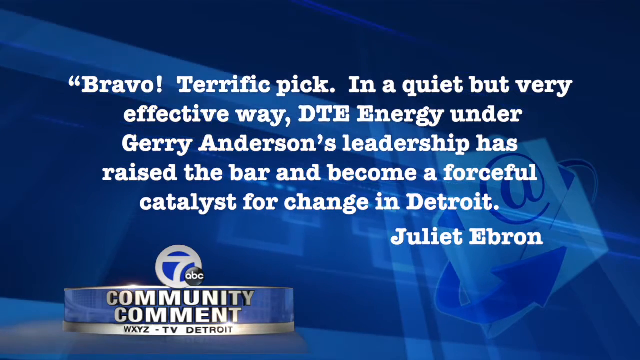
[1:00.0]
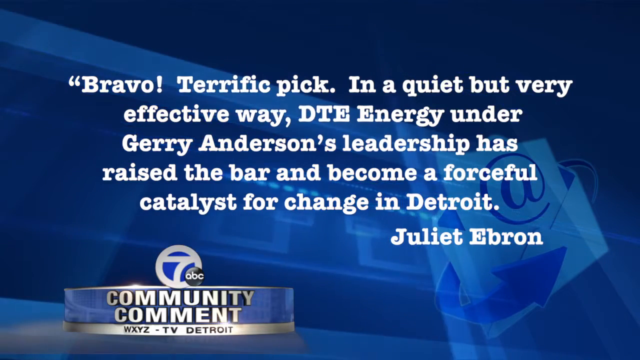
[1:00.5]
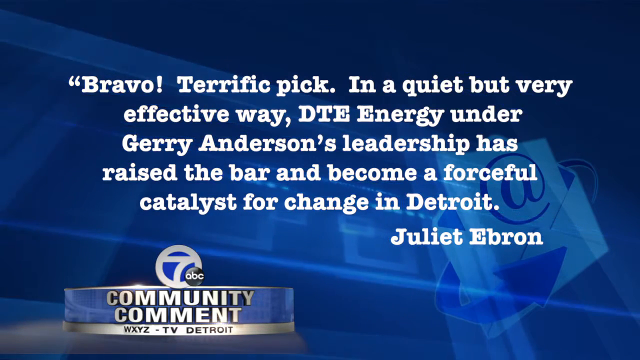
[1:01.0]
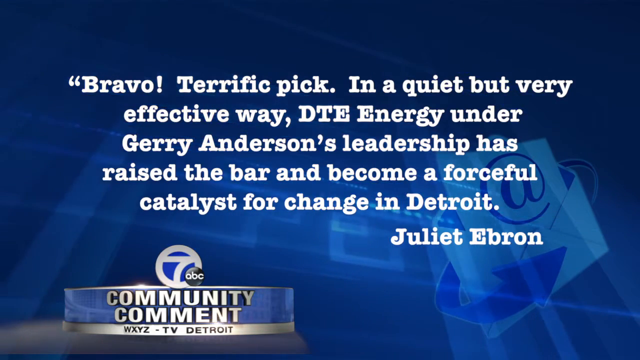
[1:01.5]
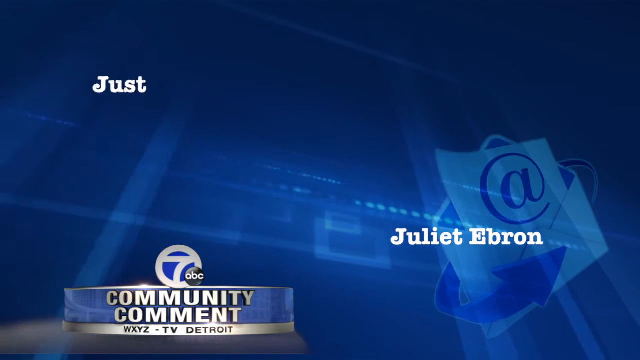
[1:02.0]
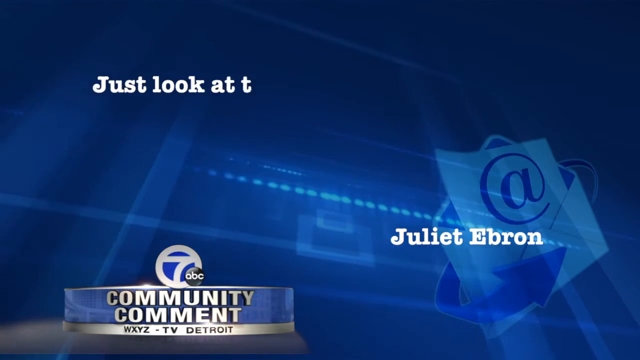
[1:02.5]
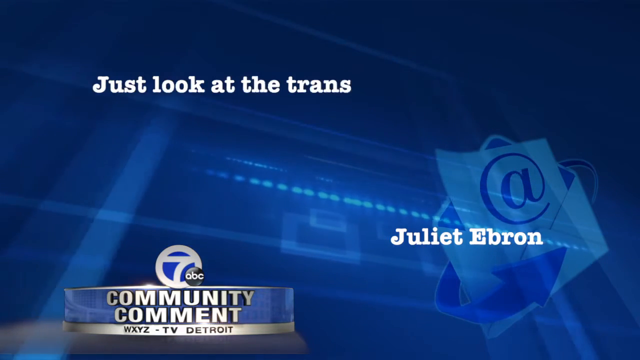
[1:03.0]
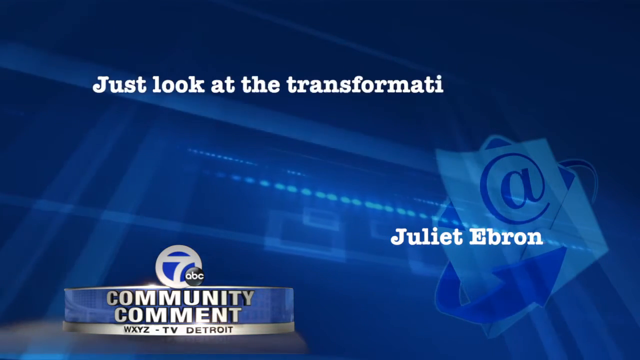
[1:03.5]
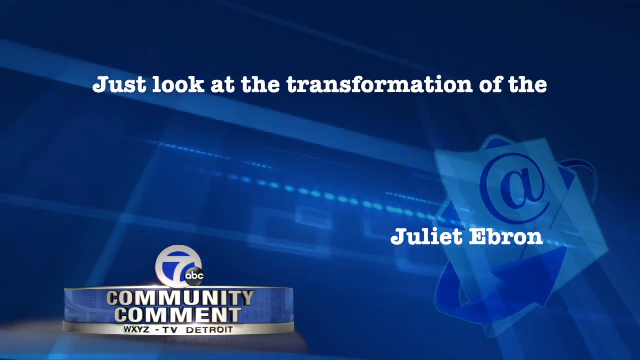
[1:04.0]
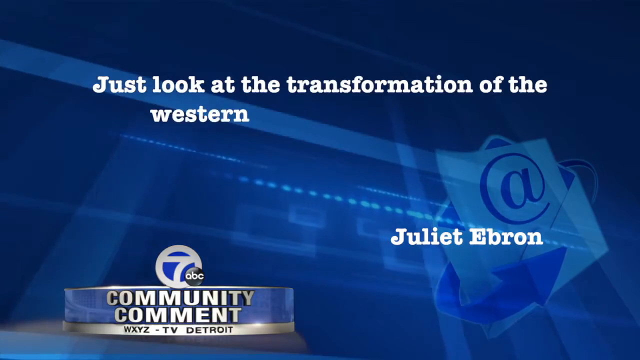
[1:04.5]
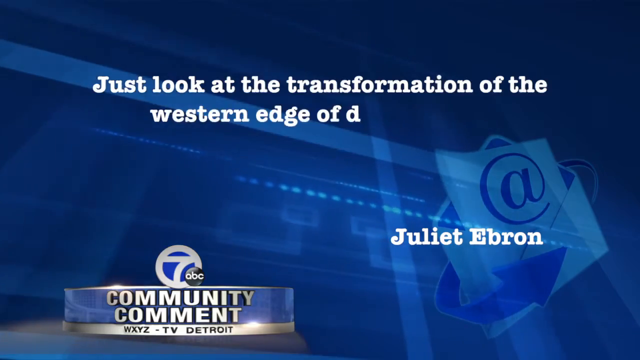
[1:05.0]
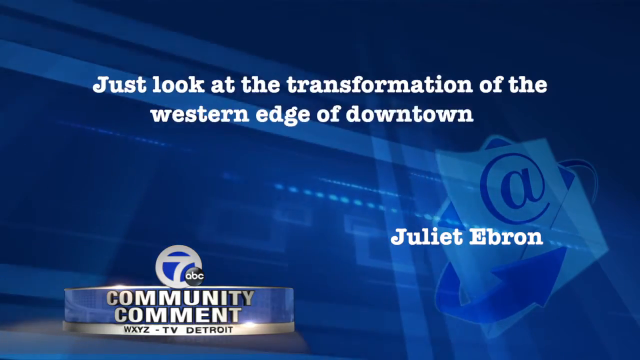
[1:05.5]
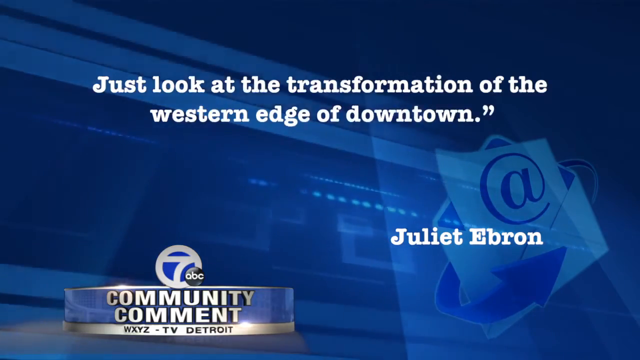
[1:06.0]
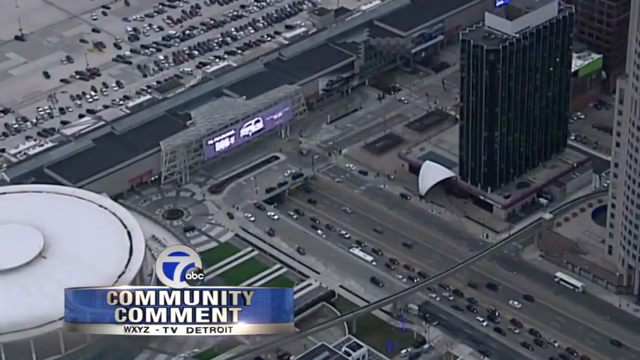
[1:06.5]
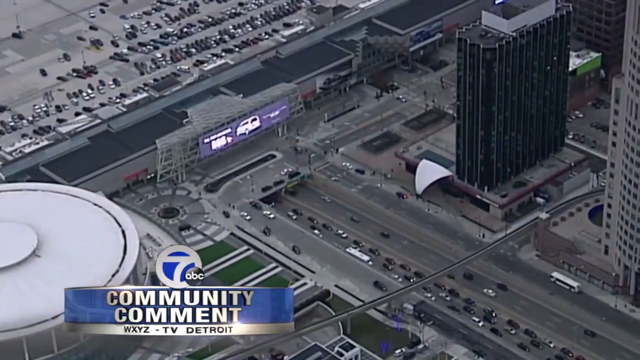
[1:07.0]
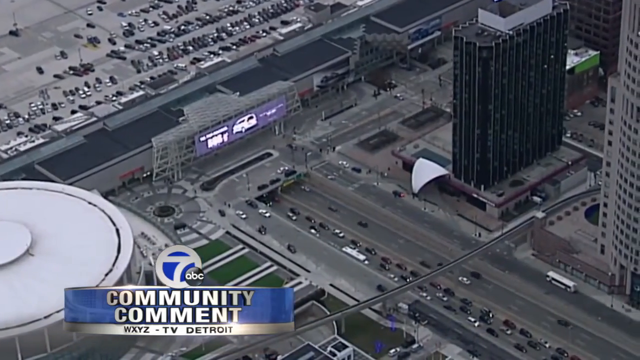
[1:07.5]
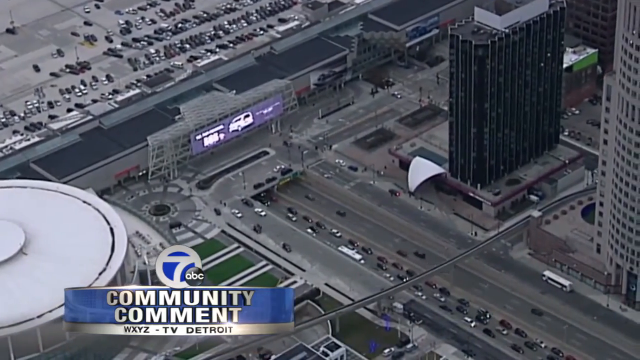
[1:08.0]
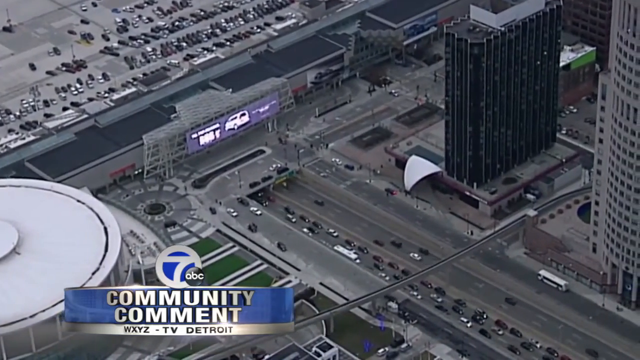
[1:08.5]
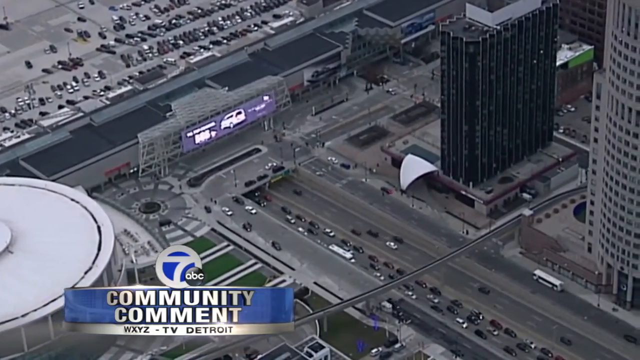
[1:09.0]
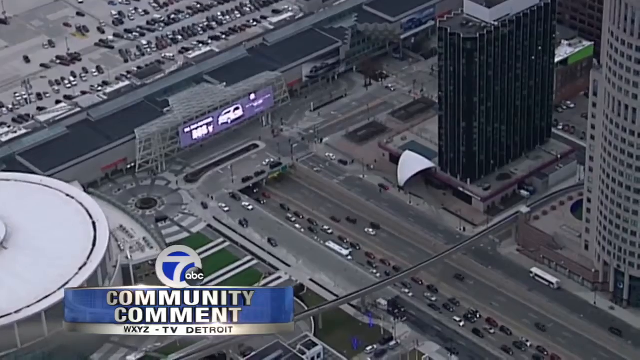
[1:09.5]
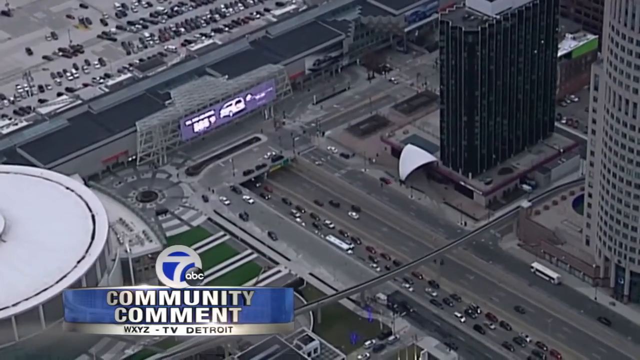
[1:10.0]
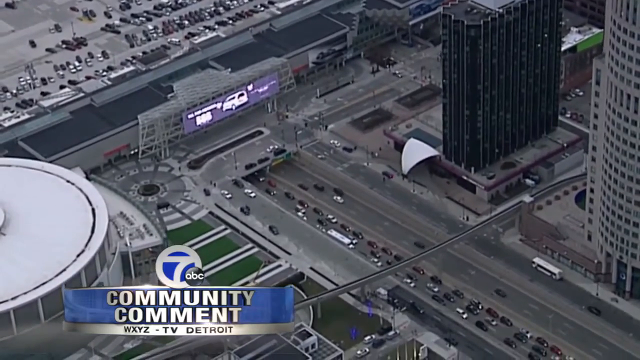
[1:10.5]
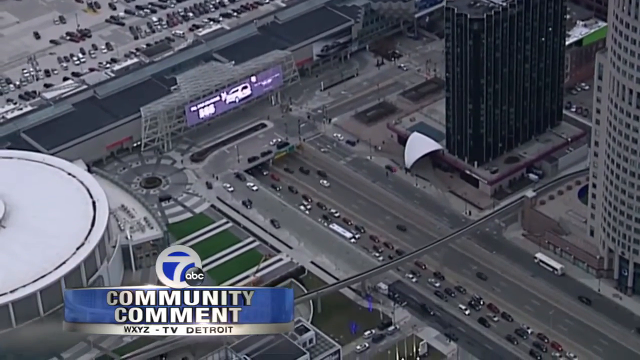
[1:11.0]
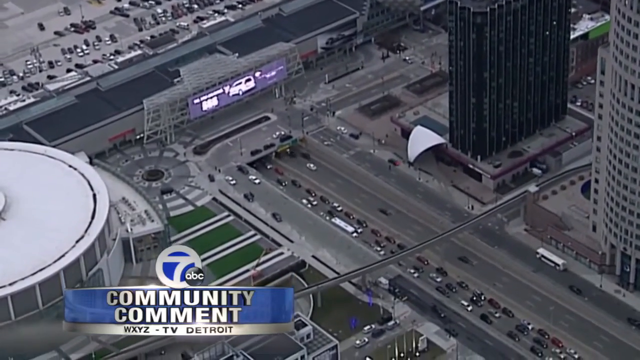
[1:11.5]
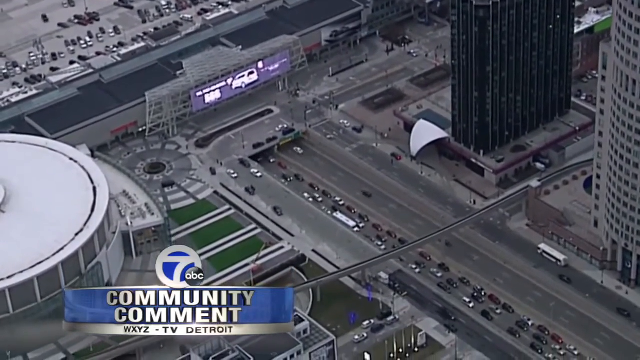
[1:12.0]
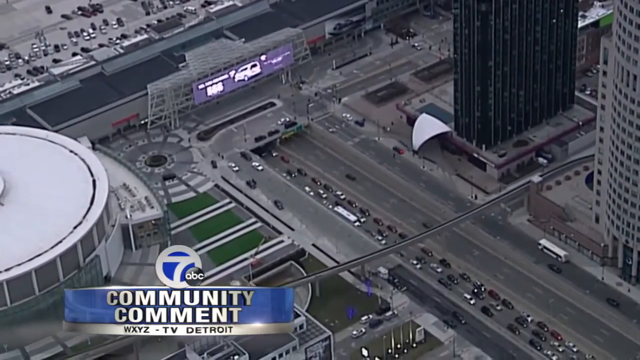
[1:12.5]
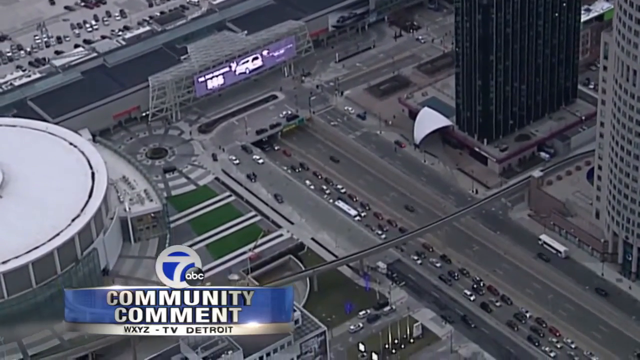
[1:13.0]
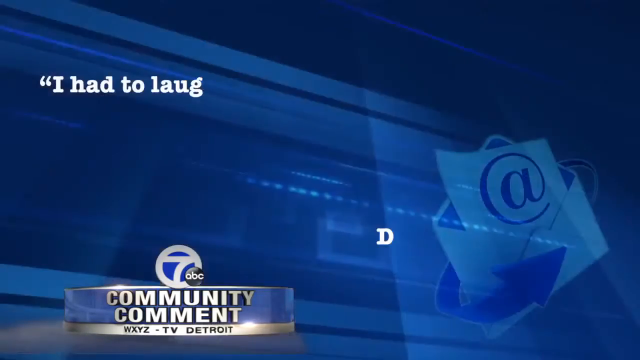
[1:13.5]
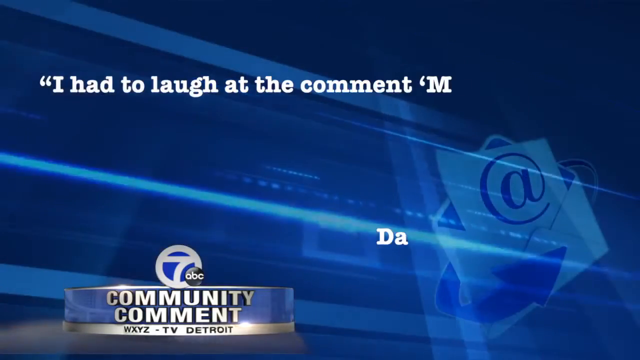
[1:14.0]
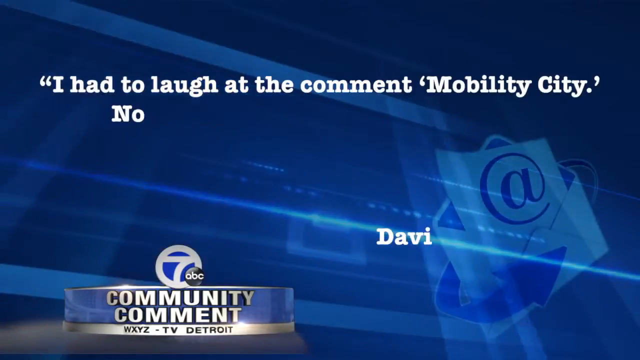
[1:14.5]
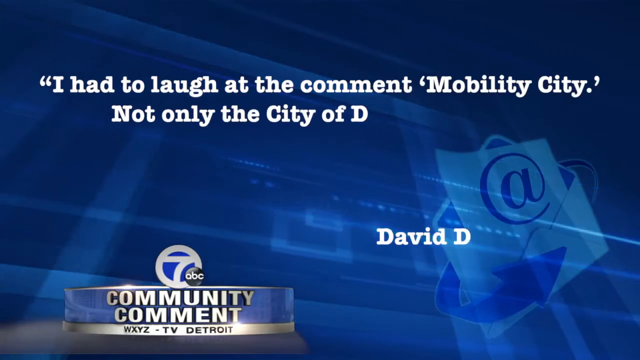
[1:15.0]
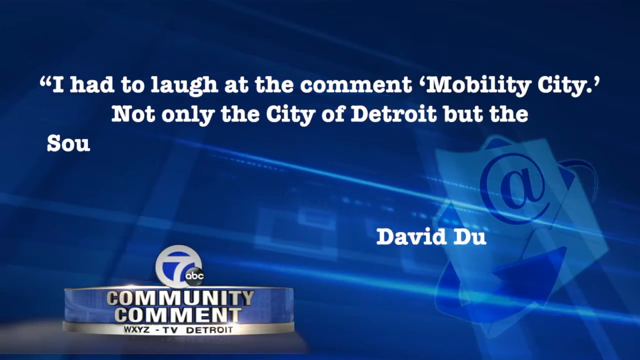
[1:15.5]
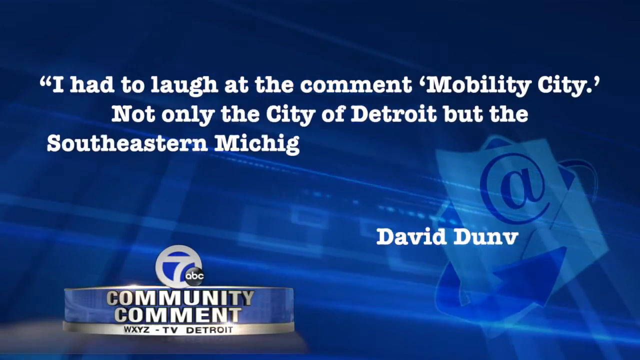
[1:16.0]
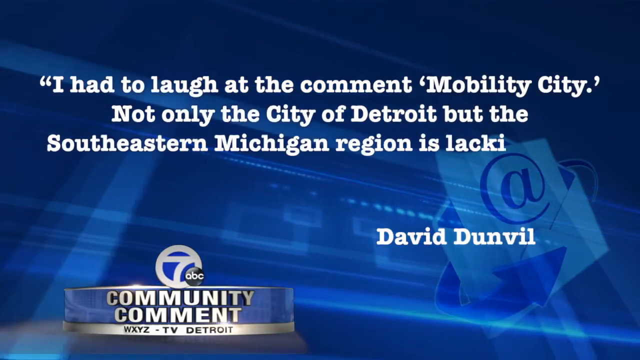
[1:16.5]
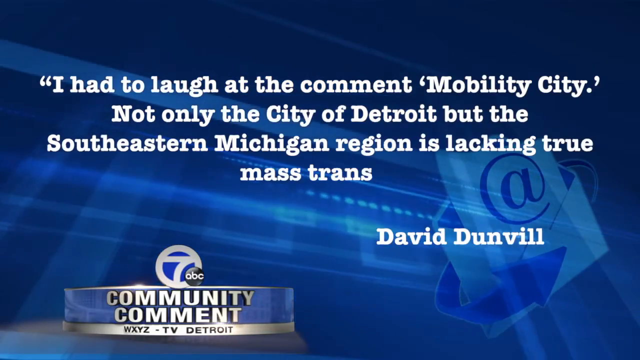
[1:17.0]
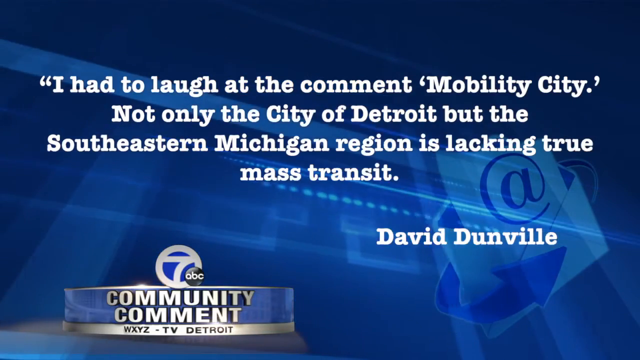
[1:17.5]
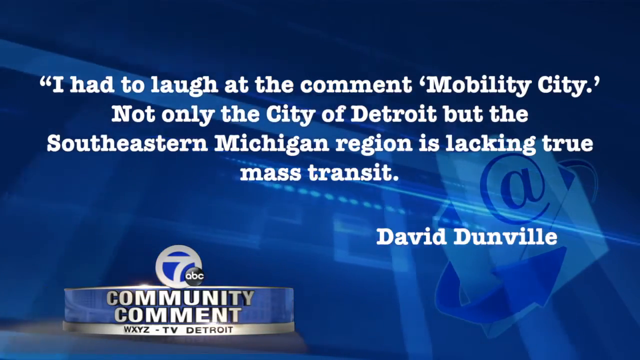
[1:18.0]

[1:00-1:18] A quote from Juliet Ebron reads: "Bravo, terrific pick in a quiet but very effective way. DTE Energy under Gary Anderson's leadership has raised the bar and become a forceful catalyst for change in Detroit." The screen's background is a mixture of green and black with art. Another quote from Juliet Ebron begins "just look at the transformation of the western". Then a tarmac road appears with very many vehicles moving at high speeds and several flats beside the road. The nearest building is painted white, and there are billboards. Another quote then appears: "I hate to laugh at the comment, mobility city. Not only the city of Detroit, but the southeastern Michigan region is lacking through mass transit." The quote is from David Danville.